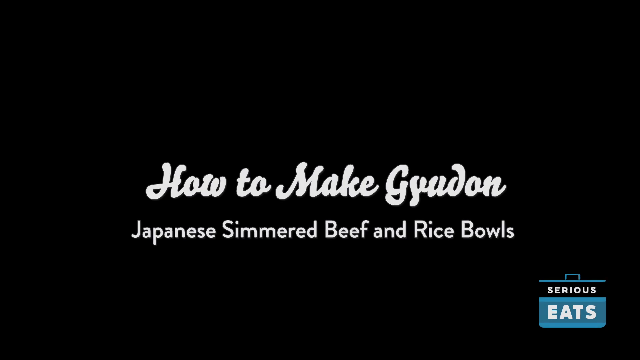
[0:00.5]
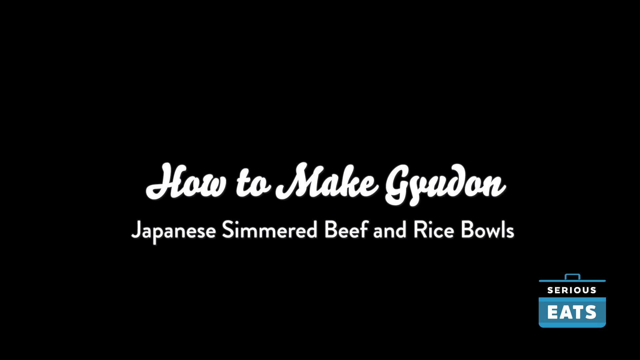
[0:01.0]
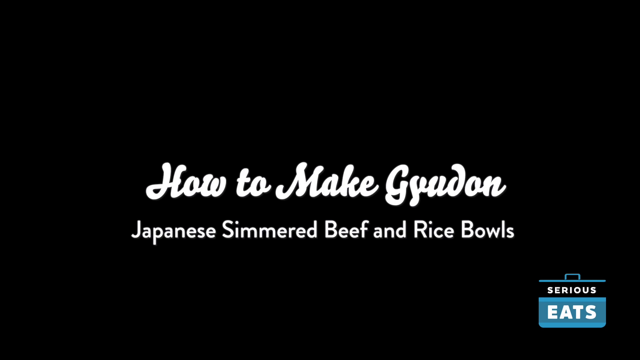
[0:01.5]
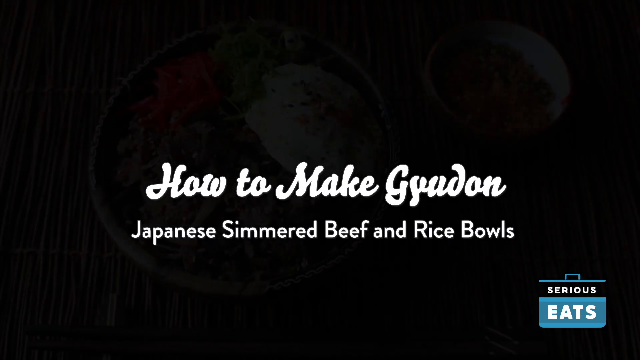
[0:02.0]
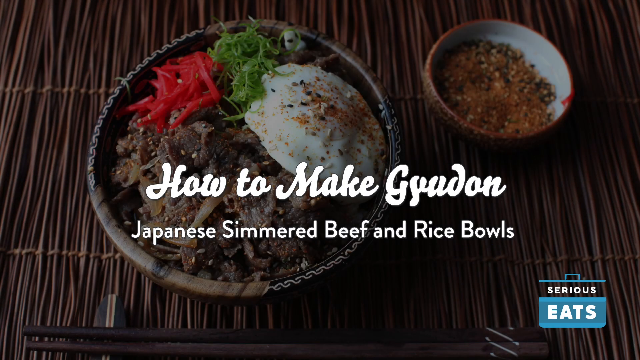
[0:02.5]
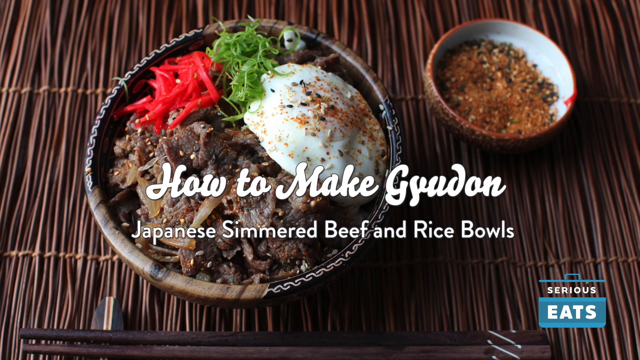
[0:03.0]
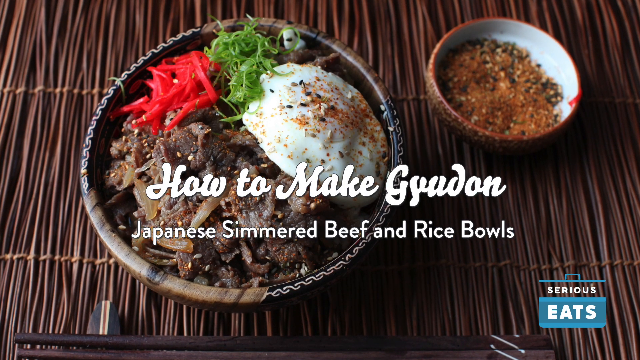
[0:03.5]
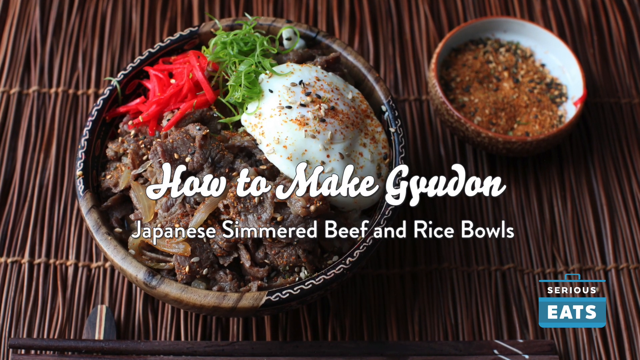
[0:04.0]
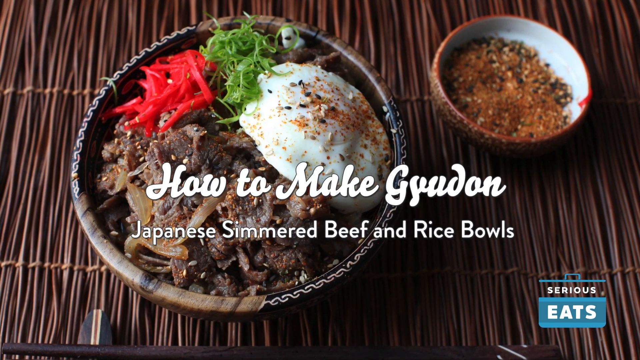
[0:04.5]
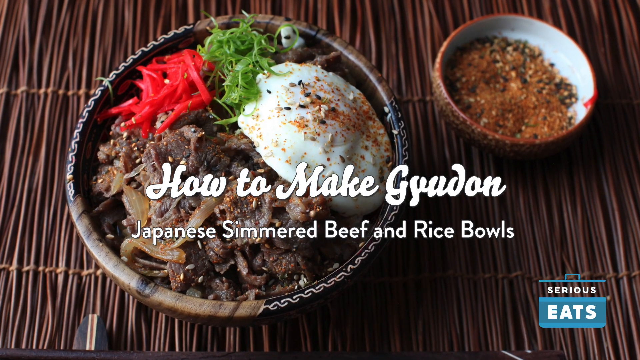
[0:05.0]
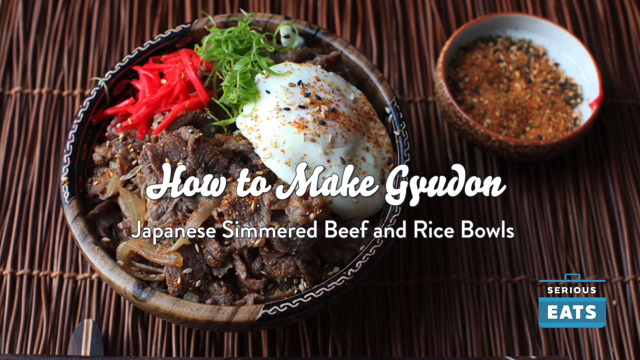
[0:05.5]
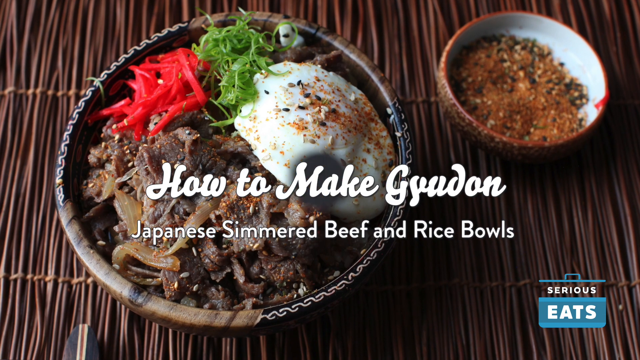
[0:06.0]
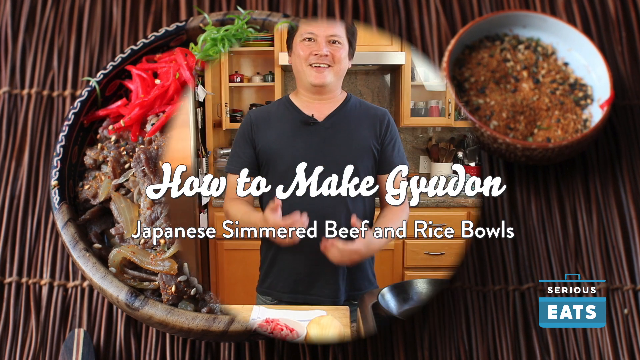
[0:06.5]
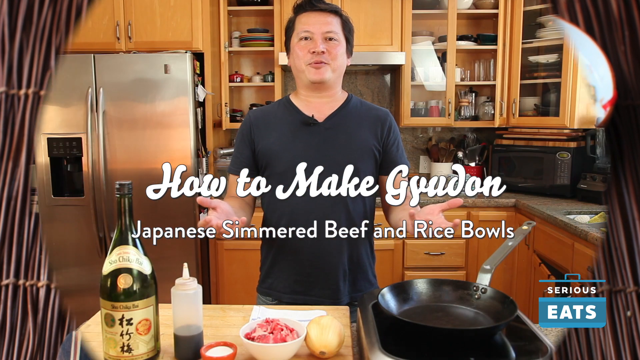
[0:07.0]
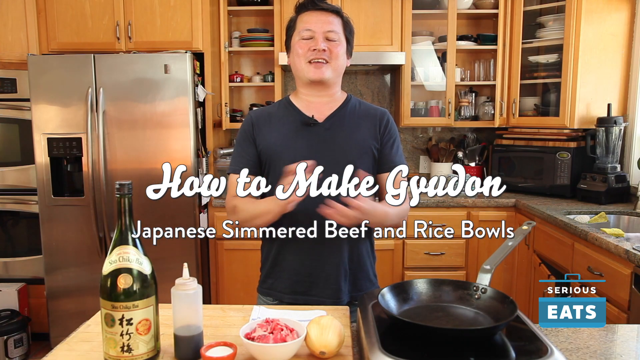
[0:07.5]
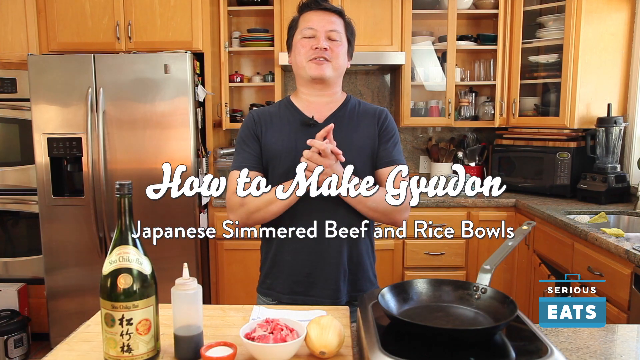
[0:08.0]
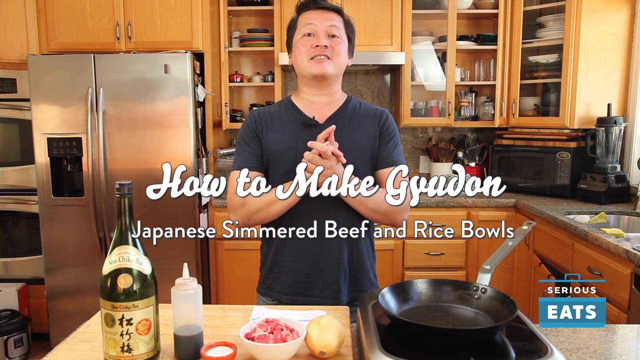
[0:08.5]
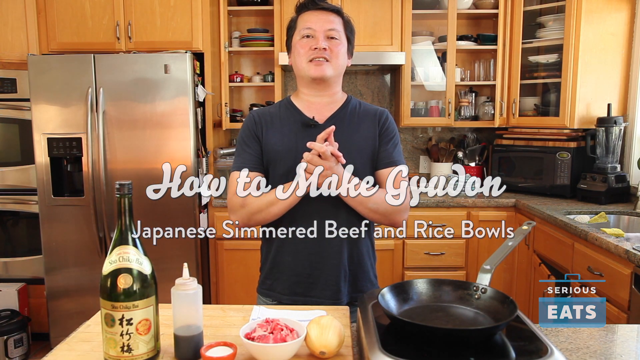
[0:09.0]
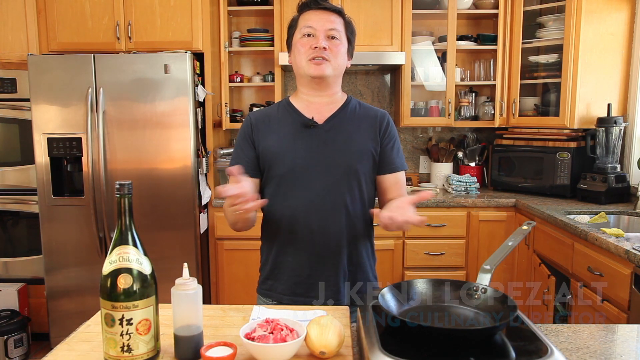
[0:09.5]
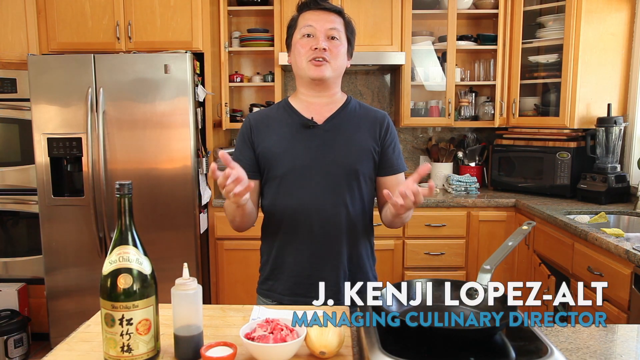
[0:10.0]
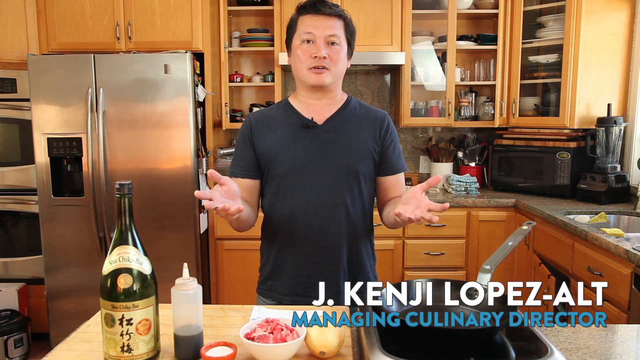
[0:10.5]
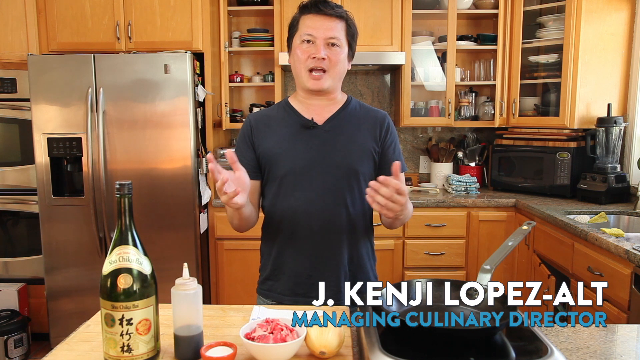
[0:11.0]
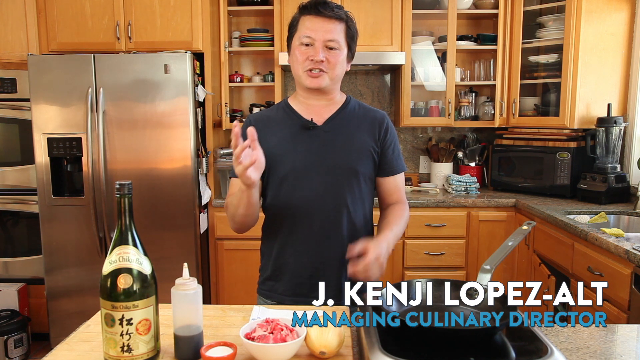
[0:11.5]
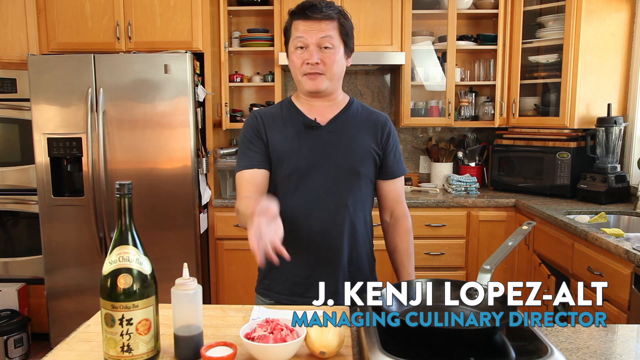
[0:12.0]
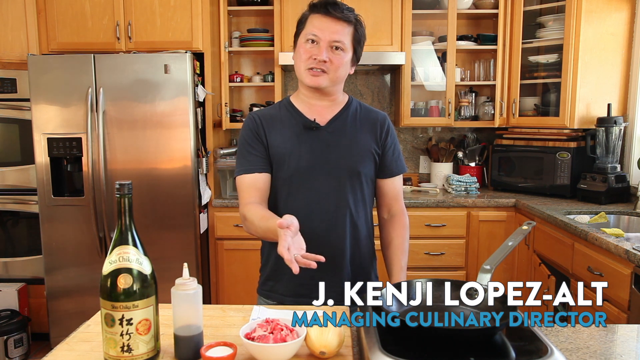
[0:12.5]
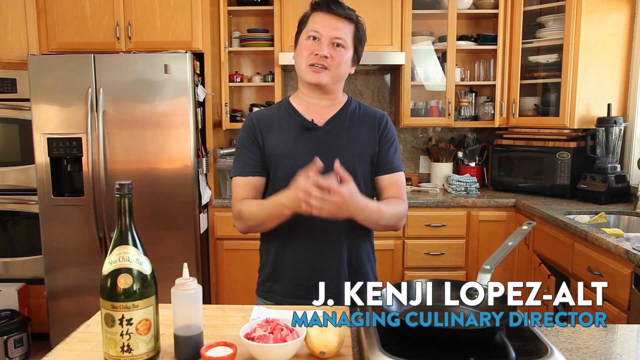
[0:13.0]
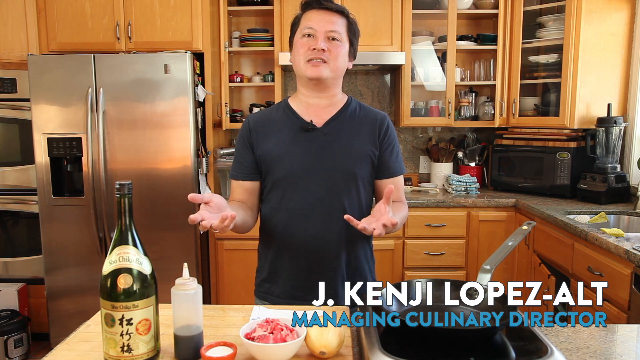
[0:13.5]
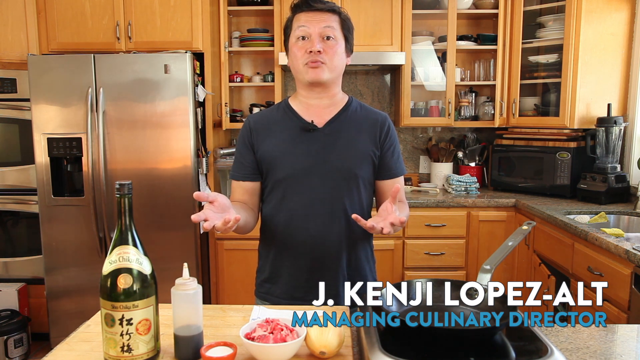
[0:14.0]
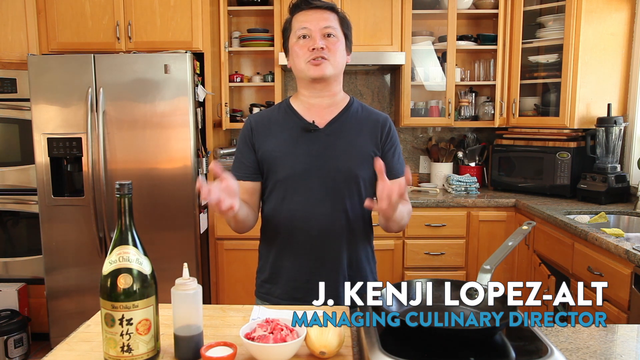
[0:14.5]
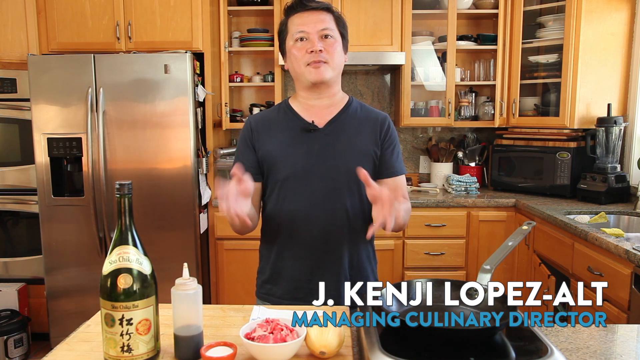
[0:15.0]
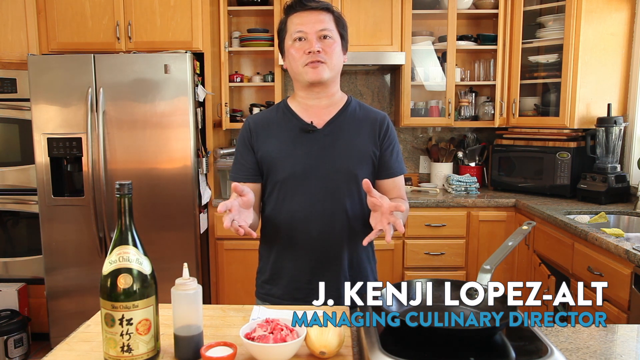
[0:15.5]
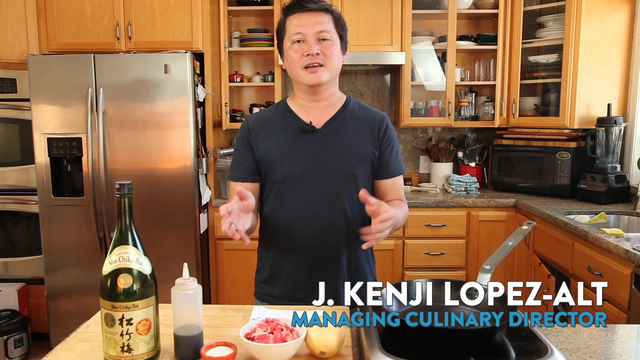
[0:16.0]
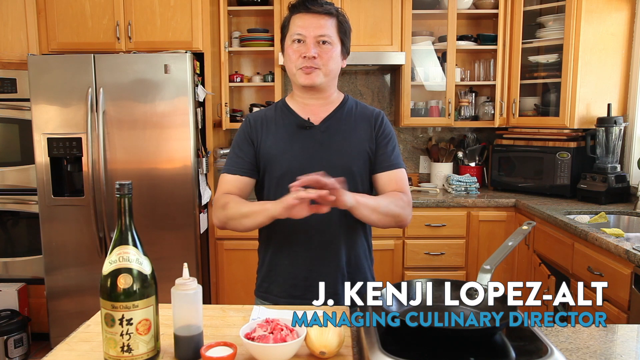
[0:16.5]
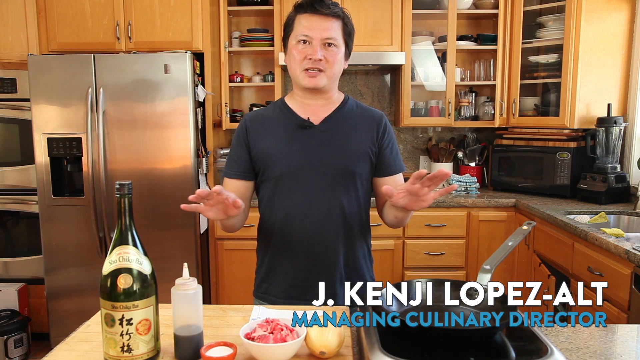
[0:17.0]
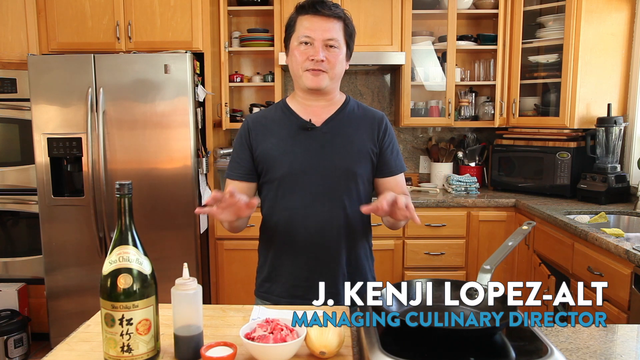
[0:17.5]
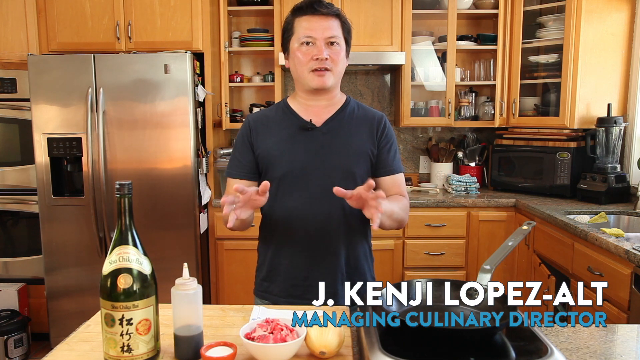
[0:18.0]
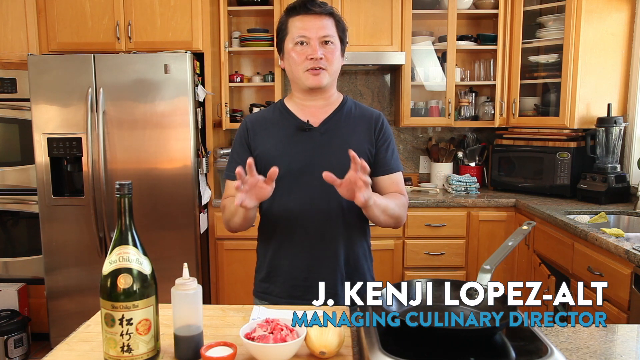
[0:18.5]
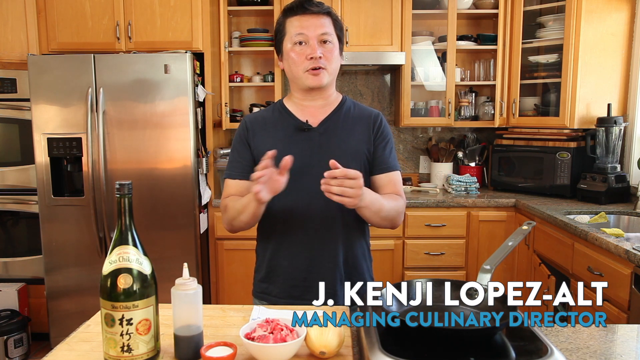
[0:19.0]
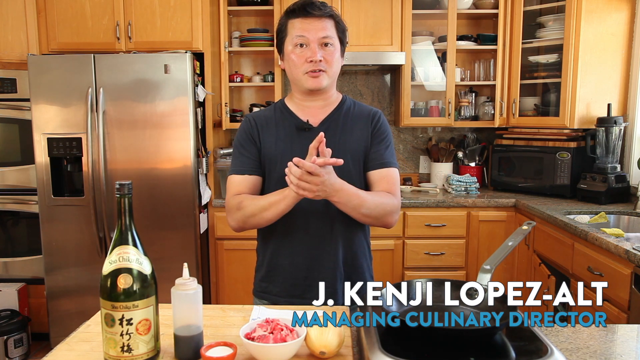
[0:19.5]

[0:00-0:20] The video opens on an image of a straw mat with a bowl of food on it that looks similar to bulgogi: shredded meat or chopped-up beef, what looks like a soft-boiled egg, and some greens. Next to it is a little bowl of what looks like sesame seeds or different types of seeds. White cursive lettering across the screen reads "How to make Gyudon", and underneath, in smaller lettering, "Japanese simmered beef and rice bowls". The camera zooms in on the bowl. It then cuts to an Asian man named J. Kenji Lopez Alt, with blue lettering under his name beginning "managing culinary". He stands in a kitchen wearing a blue t-shirt and talks to the camera, using his hands. A pan on a stove, a refrigerator behind him, and different ingredients are visible.